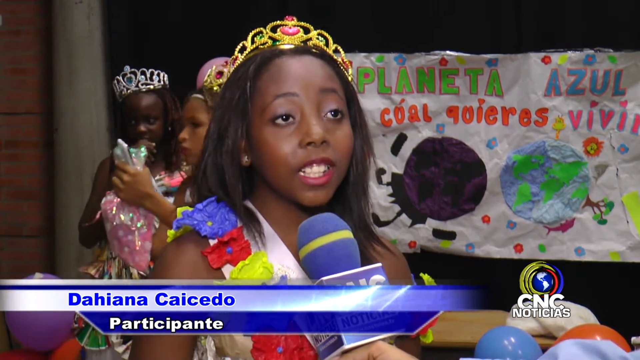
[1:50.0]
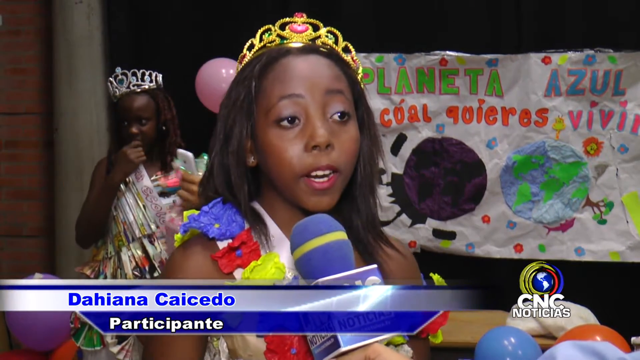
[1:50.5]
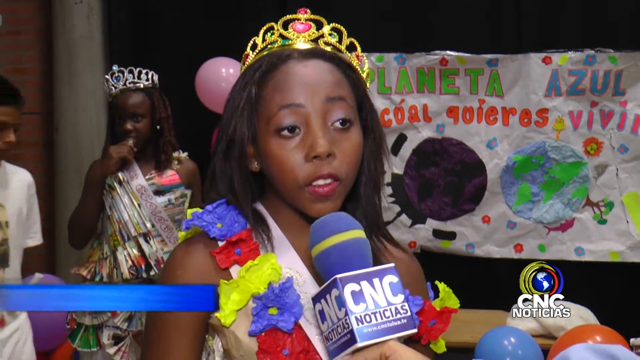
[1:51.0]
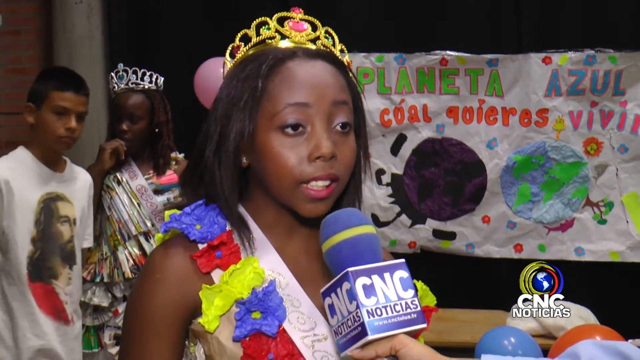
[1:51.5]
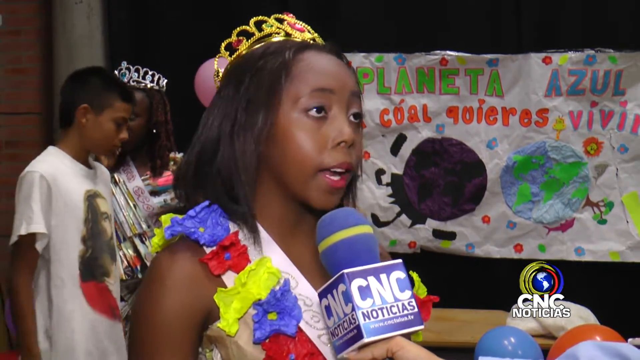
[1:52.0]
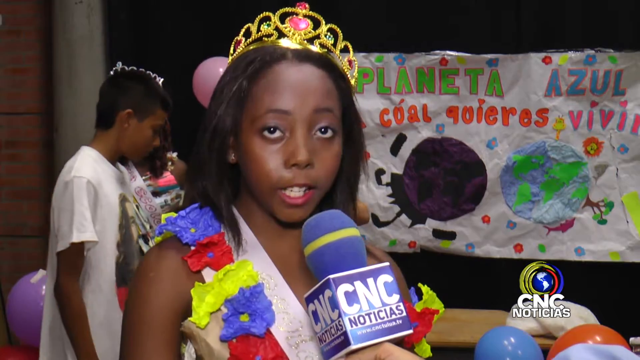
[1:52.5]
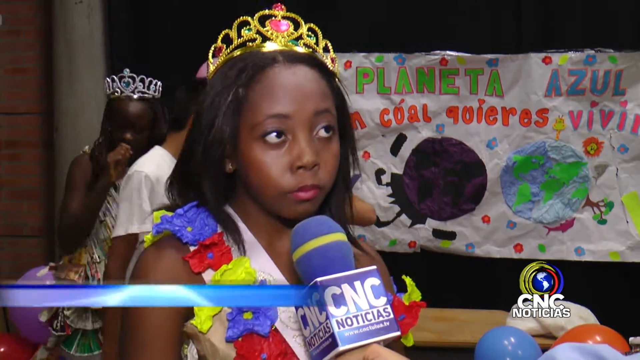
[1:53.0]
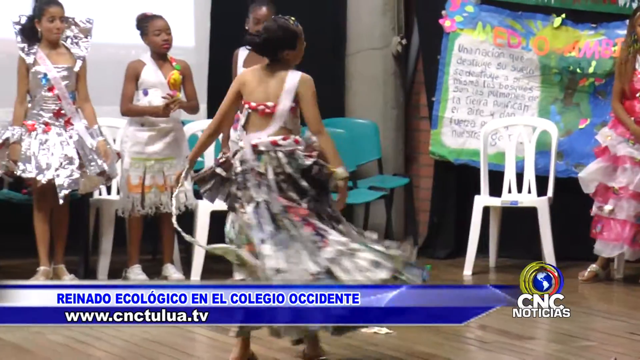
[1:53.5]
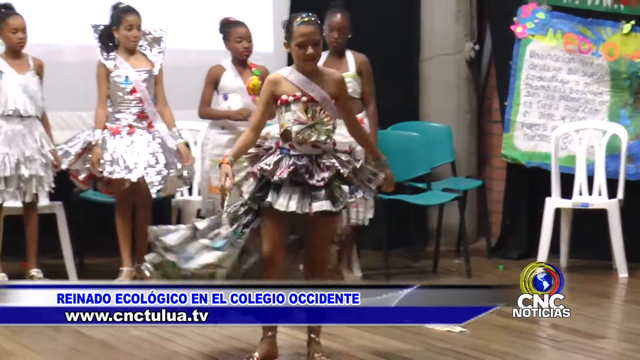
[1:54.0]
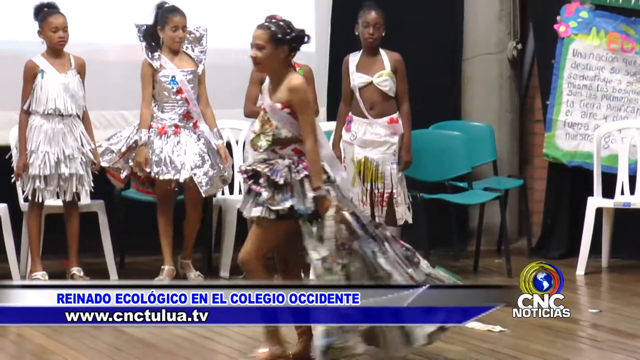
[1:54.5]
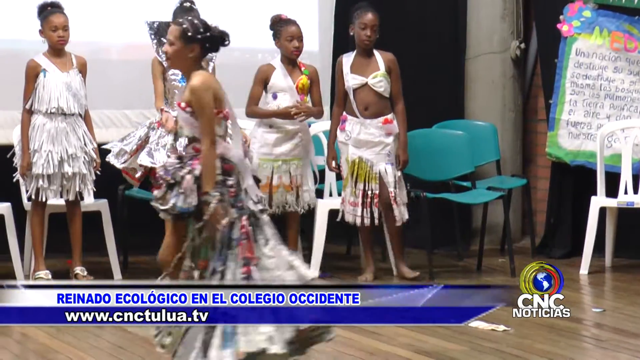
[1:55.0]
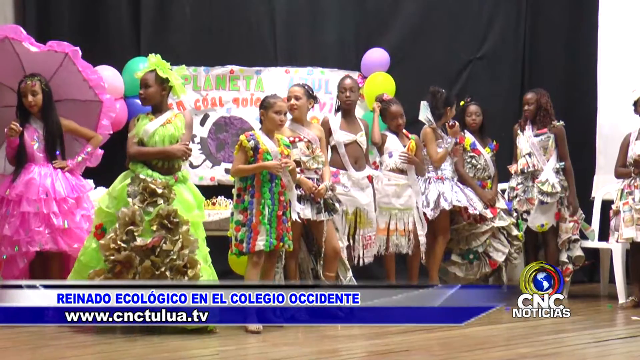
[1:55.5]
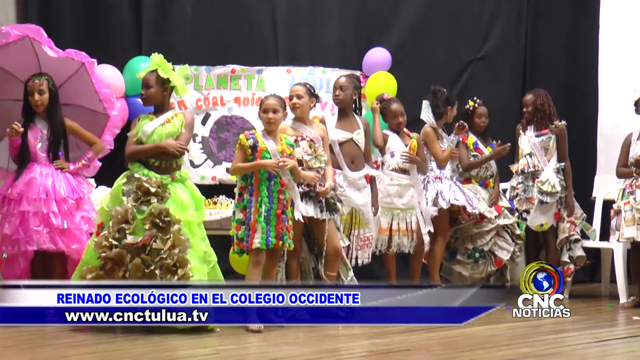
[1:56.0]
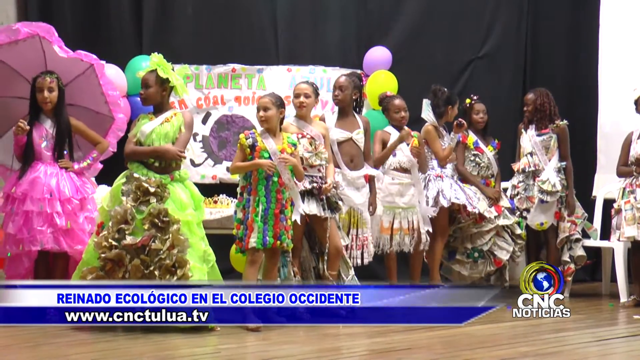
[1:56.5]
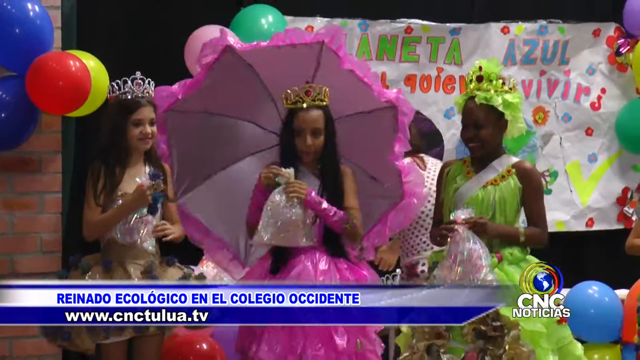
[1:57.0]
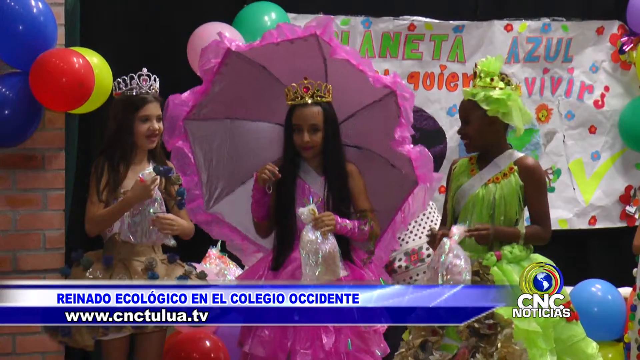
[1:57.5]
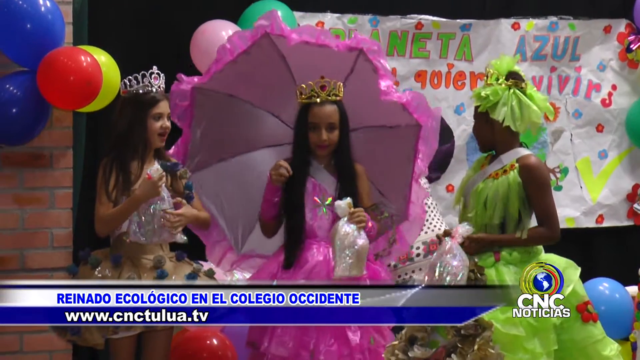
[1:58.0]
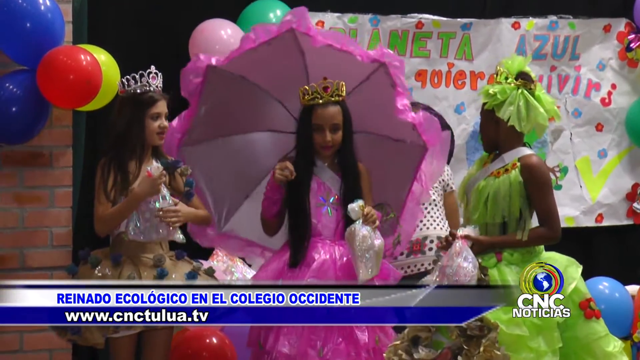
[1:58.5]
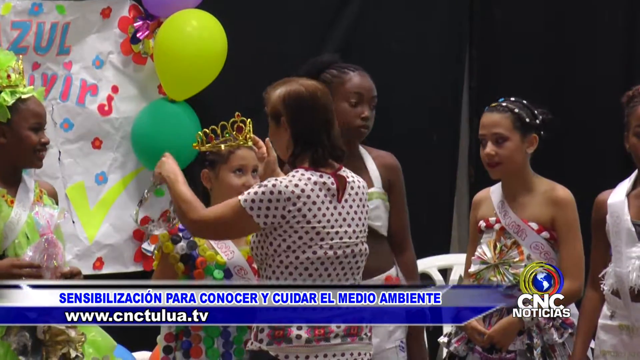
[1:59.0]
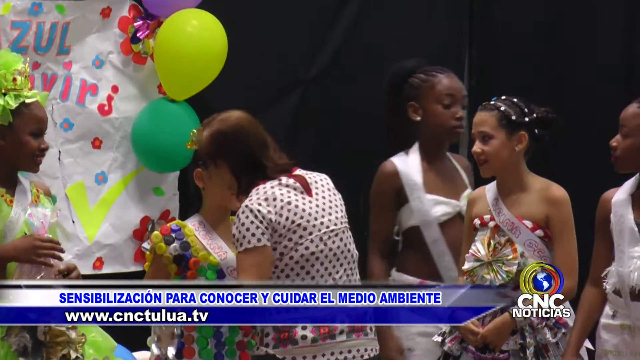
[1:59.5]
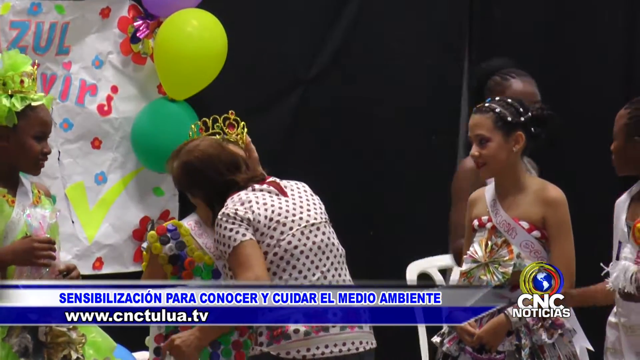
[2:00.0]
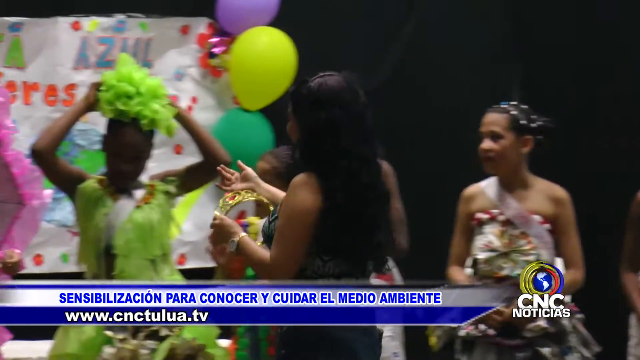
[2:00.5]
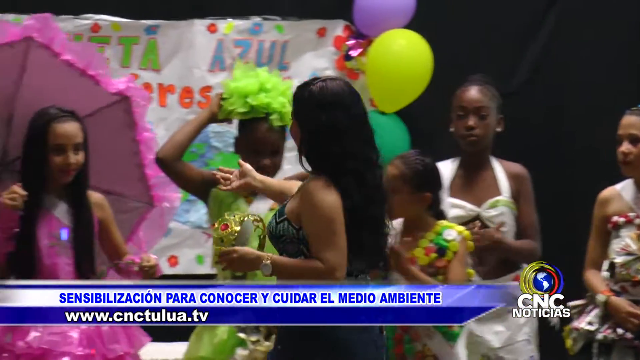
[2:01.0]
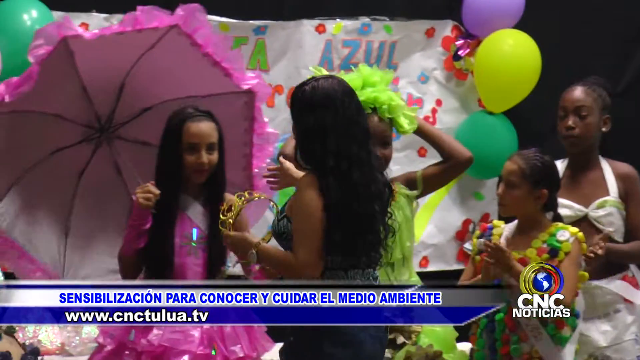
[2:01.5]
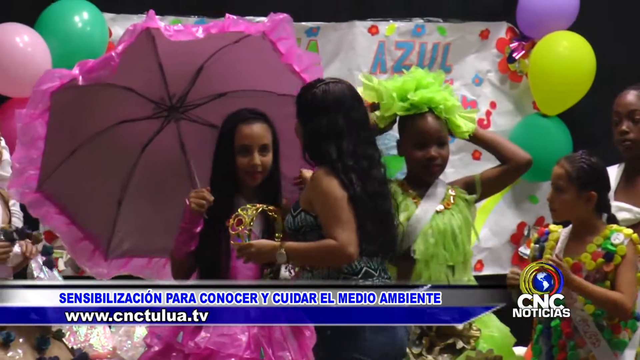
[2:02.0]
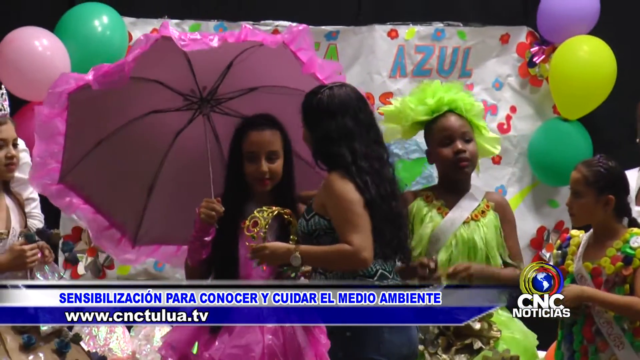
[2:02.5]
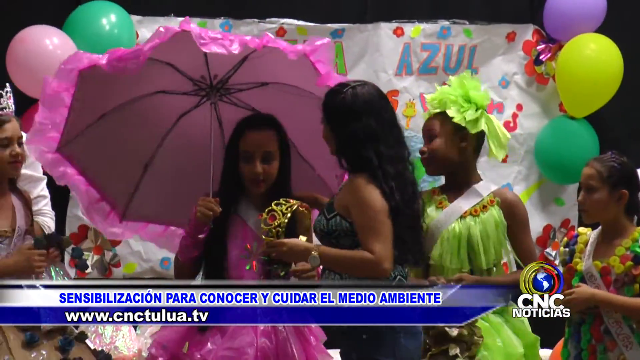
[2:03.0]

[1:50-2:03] After the interviews, more of the pageant is shown: mostly African American girls, along with some Hispanic girls, show their pageant dresses and take part in the narrative about ecology. There is sort of a congratulatory moment for each of the participants, and the event seems kind of like a prom or party and seems lively. The broadcast closes with "C&C Noticias", "Las Noticias Que Usted Quiere Ver. Lunes a Viernes", "Sus 4 Emisiones" at 6:30 a.m., 1 p.m., 8 p.m. and 10 p.m., and the website www.cnctula.tv.